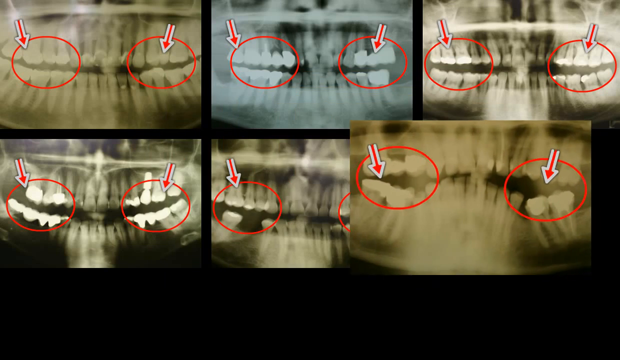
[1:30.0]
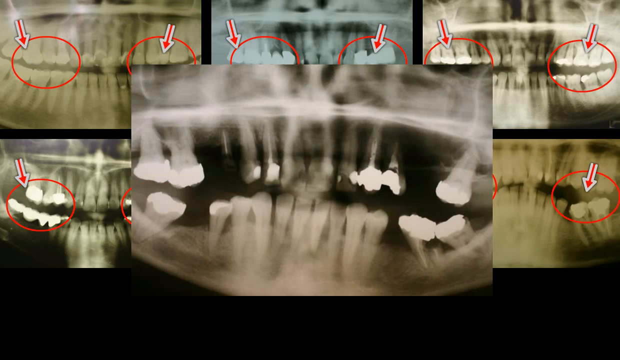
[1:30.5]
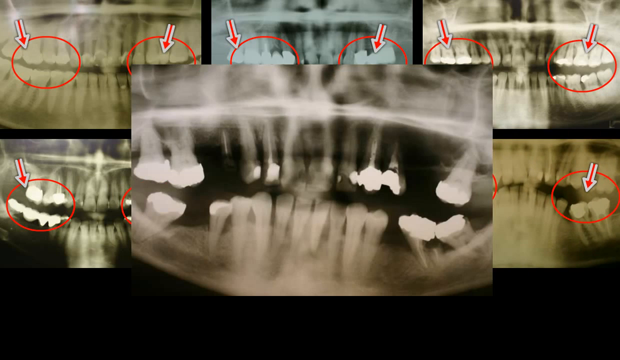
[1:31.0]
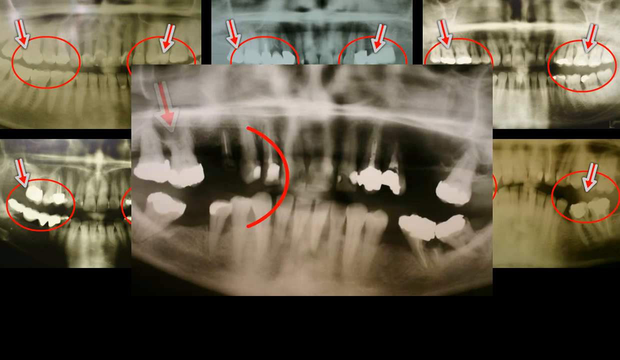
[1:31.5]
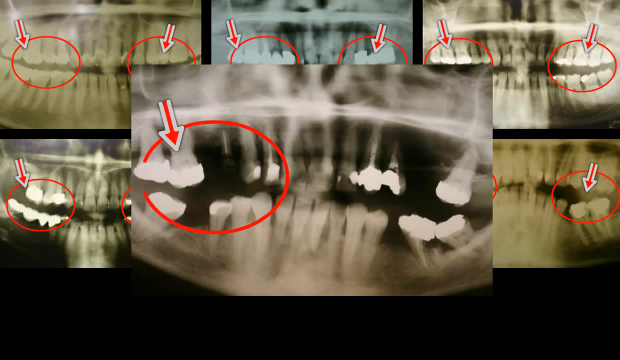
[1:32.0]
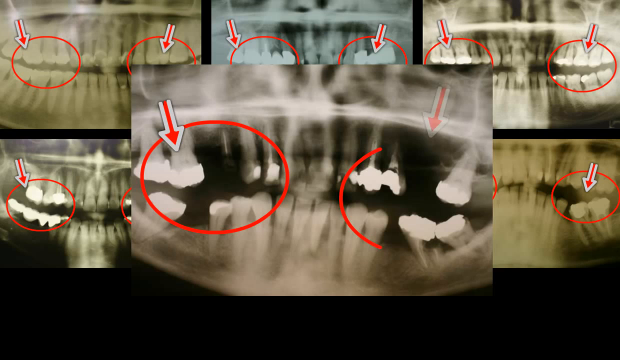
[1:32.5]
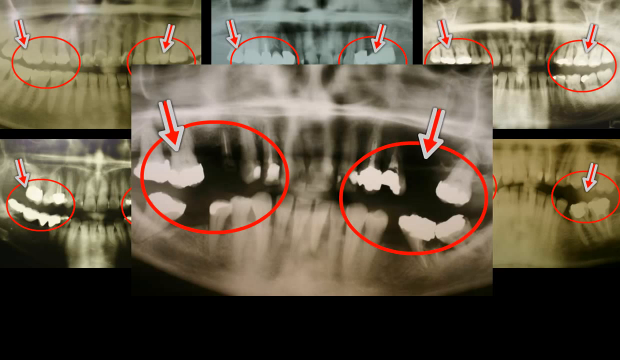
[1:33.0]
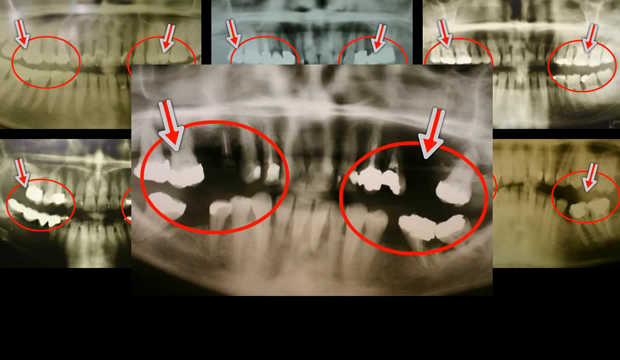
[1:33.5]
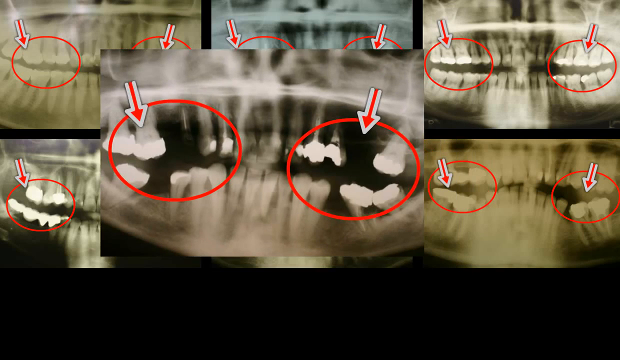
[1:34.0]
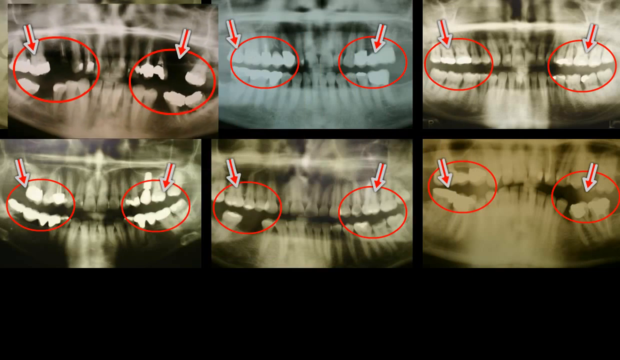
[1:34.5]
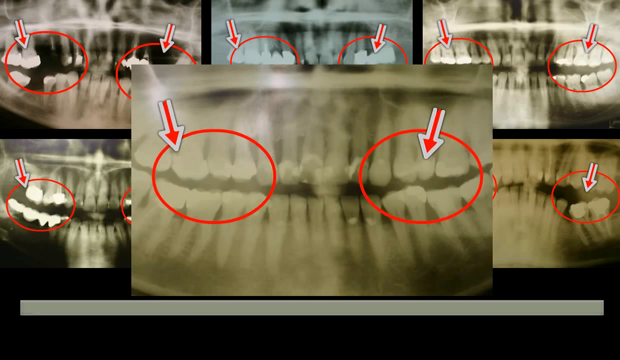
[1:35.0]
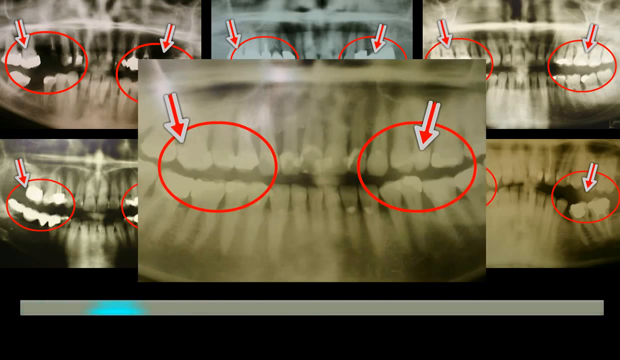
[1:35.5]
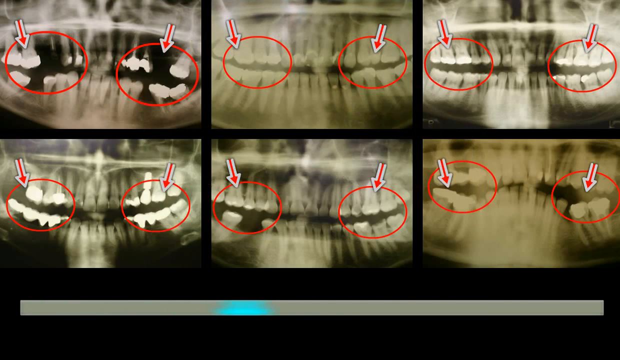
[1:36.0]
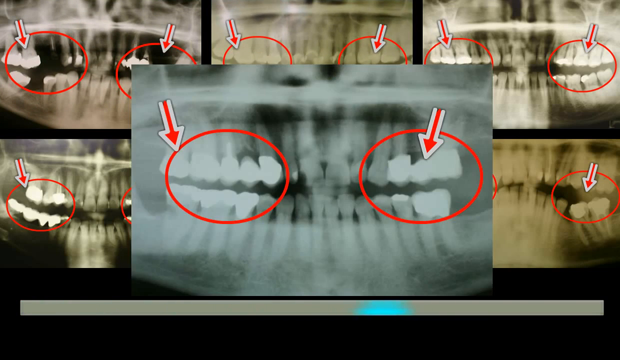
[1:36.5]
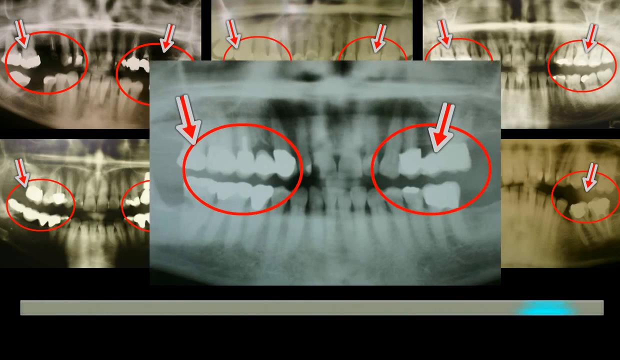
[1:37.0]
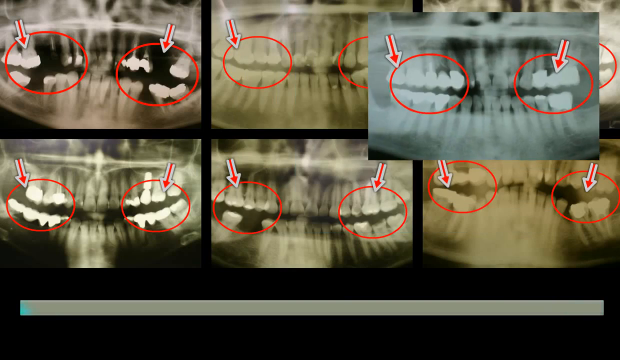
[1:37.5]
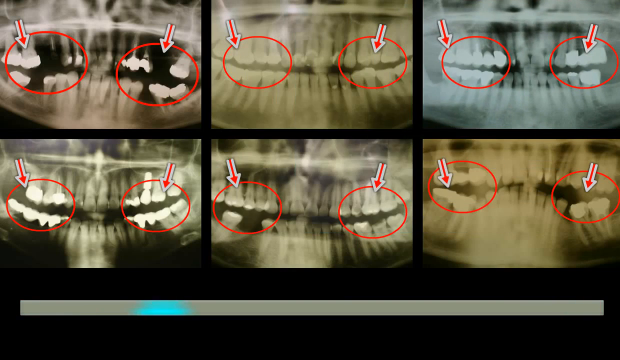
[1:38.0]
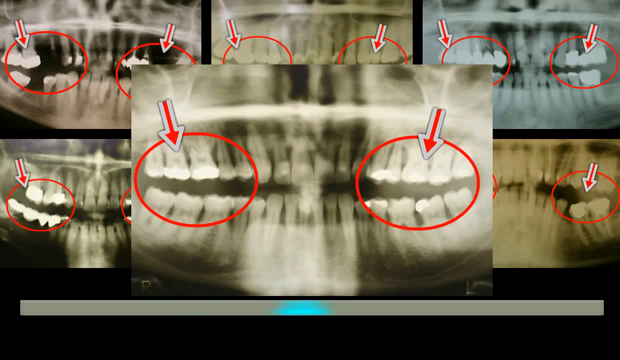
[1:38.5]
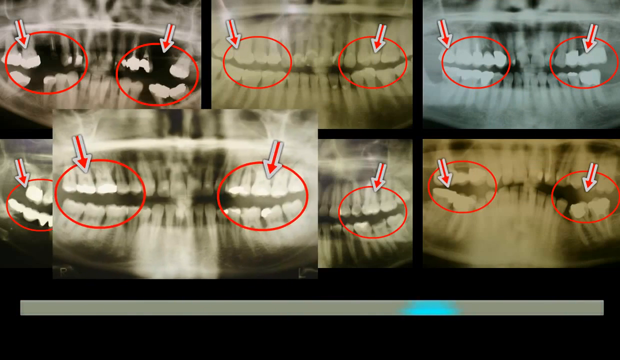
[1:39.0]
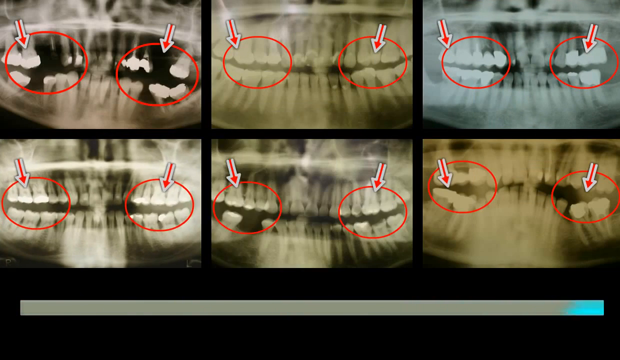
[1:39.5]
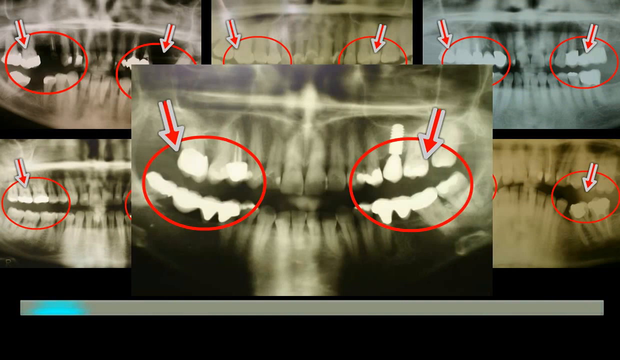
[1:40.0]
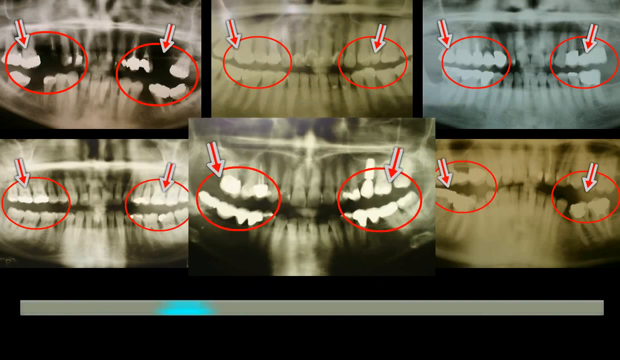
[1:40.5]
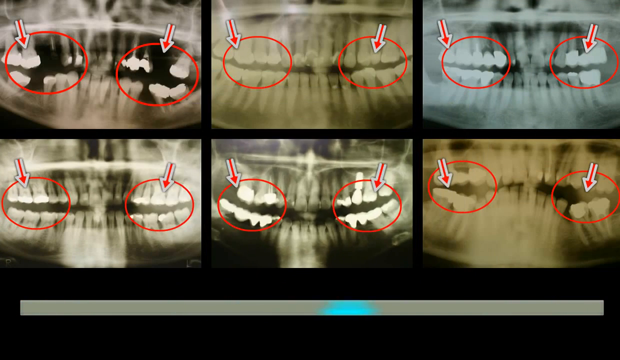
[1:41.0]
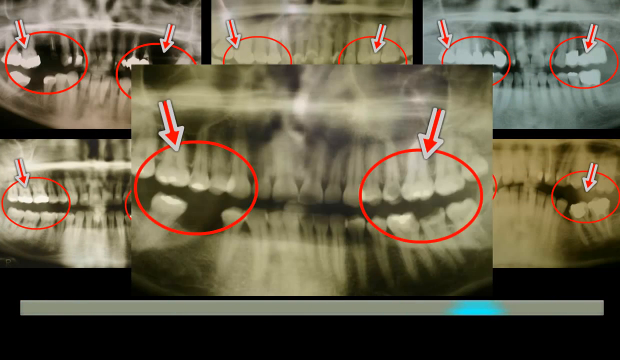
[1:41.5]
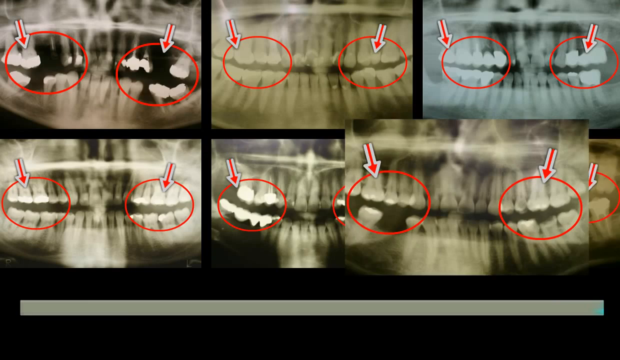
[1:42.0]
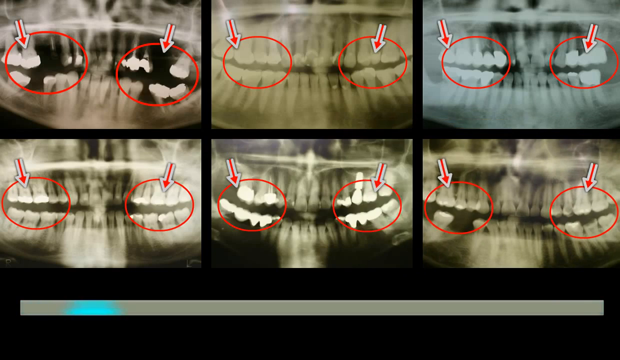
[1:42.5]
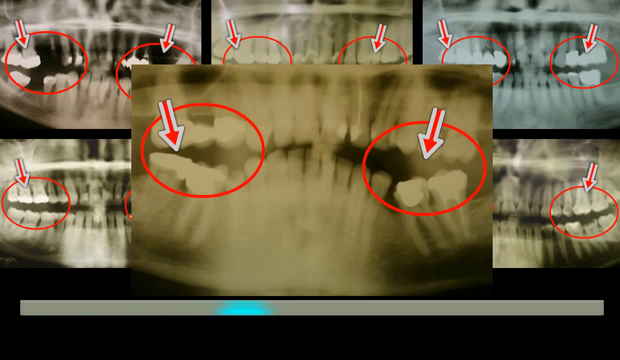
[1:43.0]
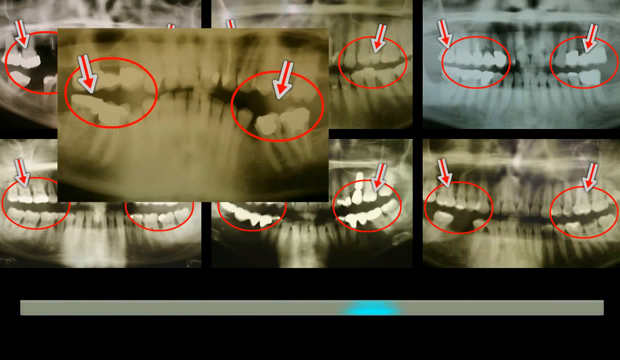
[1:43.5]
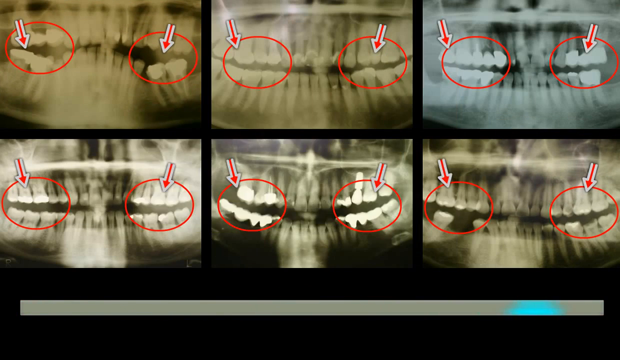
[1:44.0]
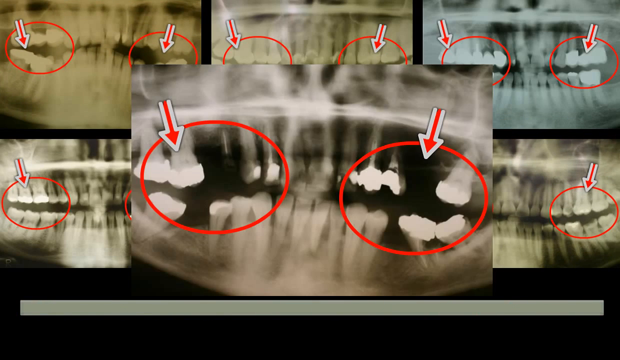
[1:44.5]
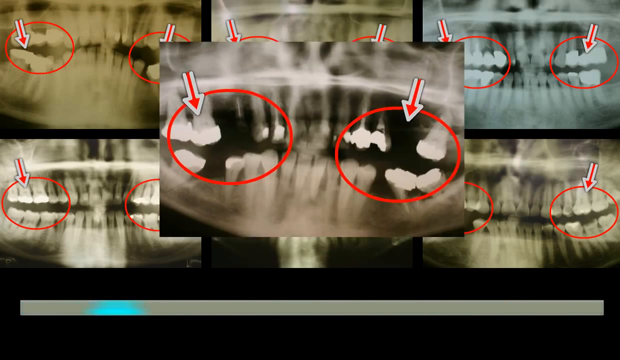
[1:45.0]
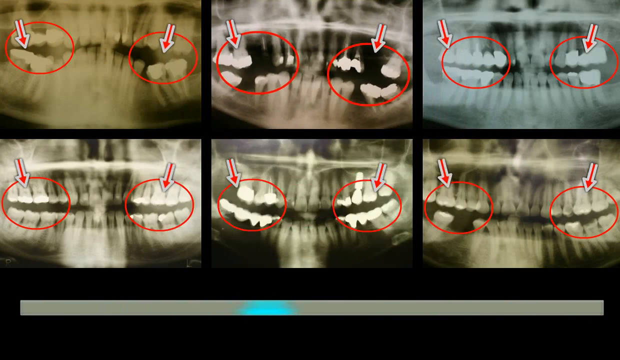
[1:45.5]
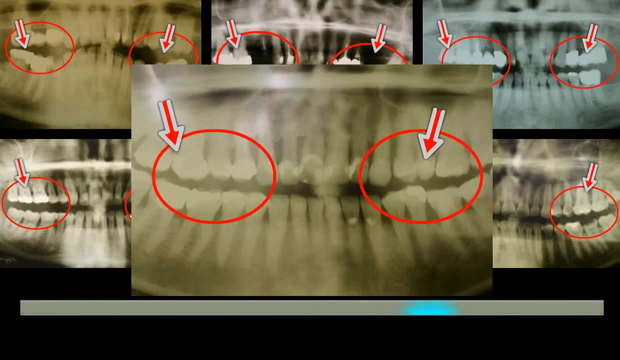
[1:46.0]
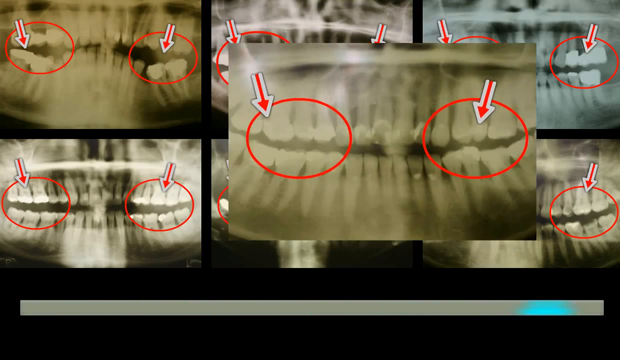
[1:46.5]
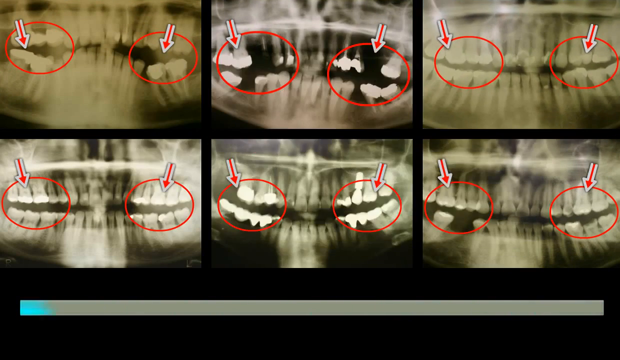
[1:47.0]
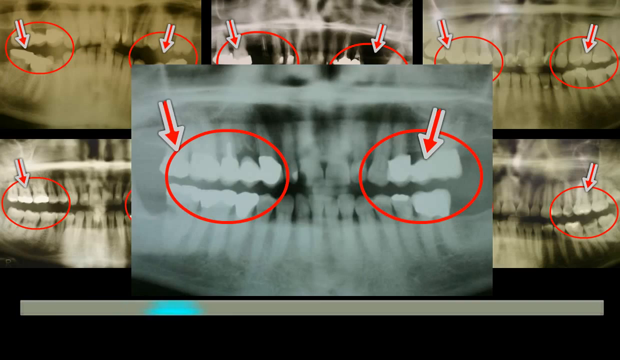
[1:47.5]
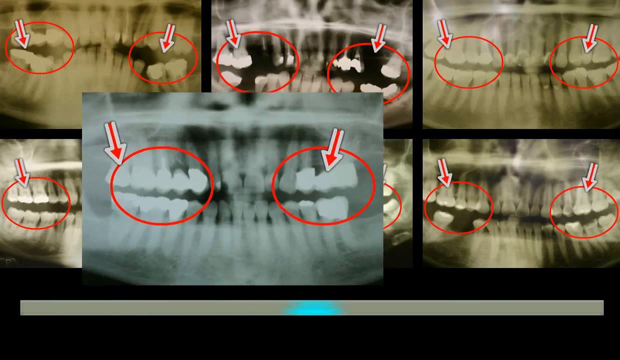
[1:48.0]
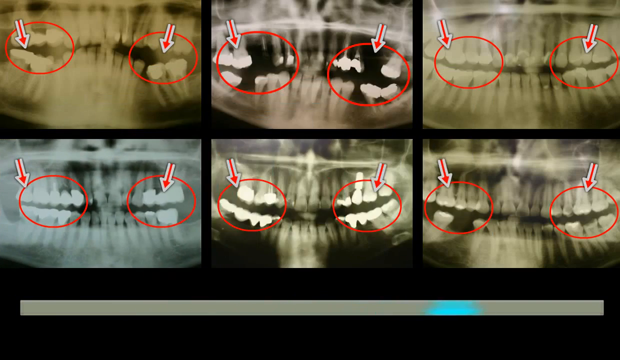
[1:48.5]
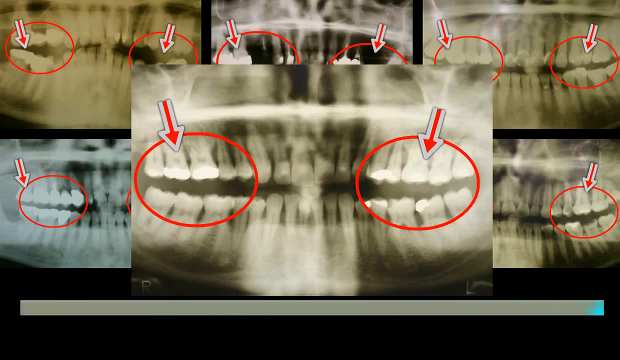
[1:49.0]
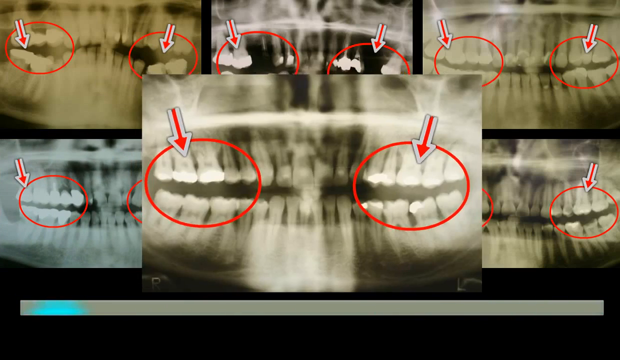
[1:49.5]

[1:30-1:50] Two rows of X-rays of teeth fill the background, each with a red circle on the left and right sides of the teeth and arrows pointing to each circle. A large X-ray is superimposed over the background X-rays, and two red circles are placed on the left and right sides of the mouth with arrows on each. The process repeats: new X-rays with the same red circles and arrows cover each of the background X-rays, starting at the top left and moving right, then starting at the bottom left of the second row and moving right. The old X-rays are replaced with new X-rays of teeth with red arrows on them. This happens a total of two times; on the second pass, the bottom right X-ray has not yet been replaced.